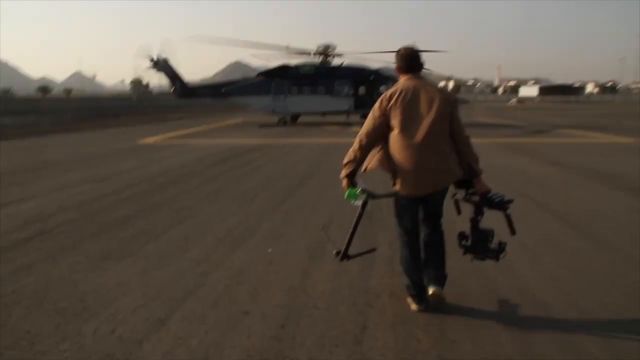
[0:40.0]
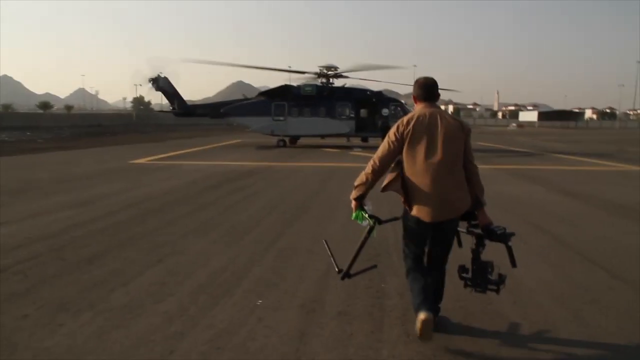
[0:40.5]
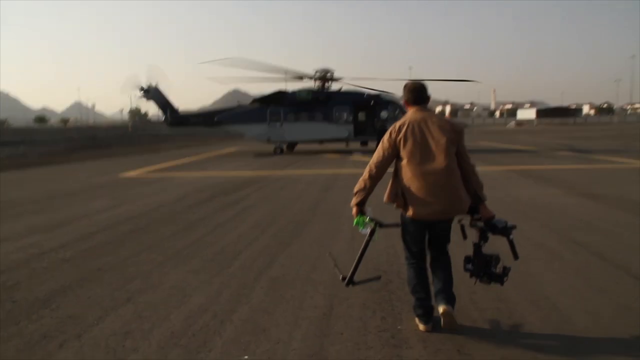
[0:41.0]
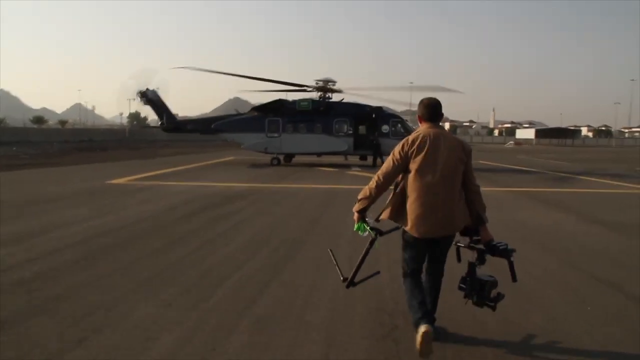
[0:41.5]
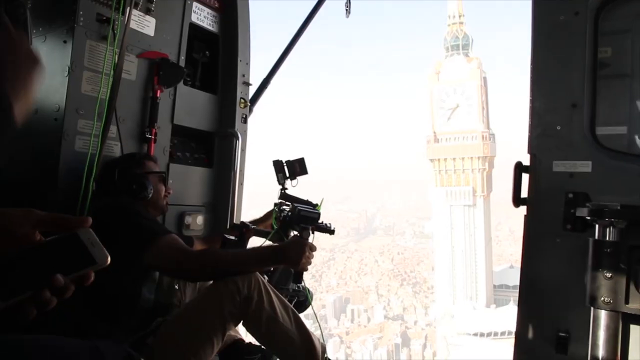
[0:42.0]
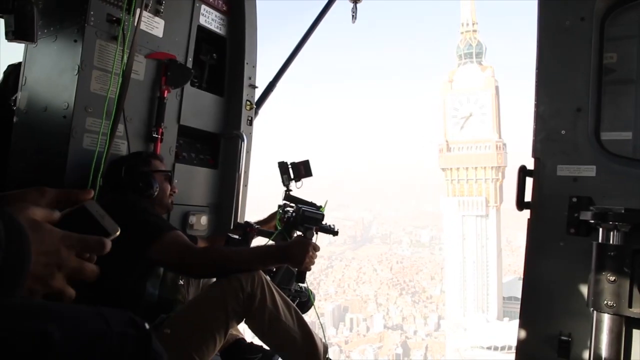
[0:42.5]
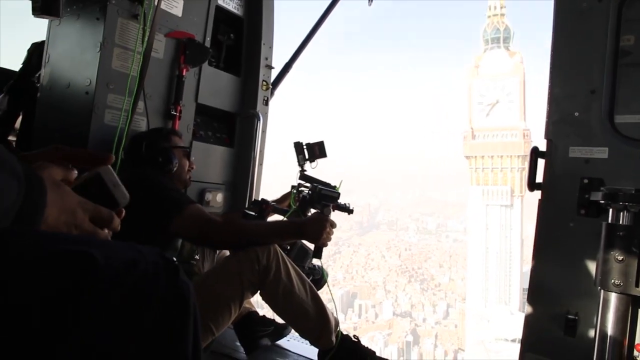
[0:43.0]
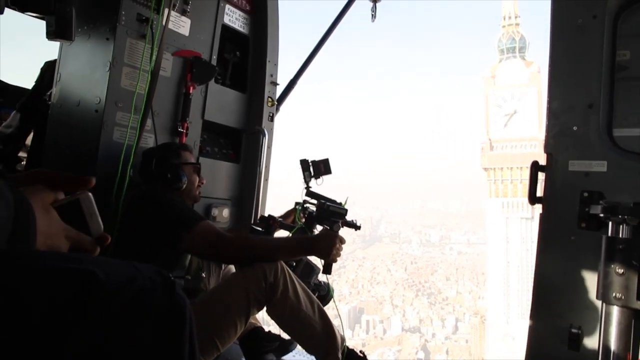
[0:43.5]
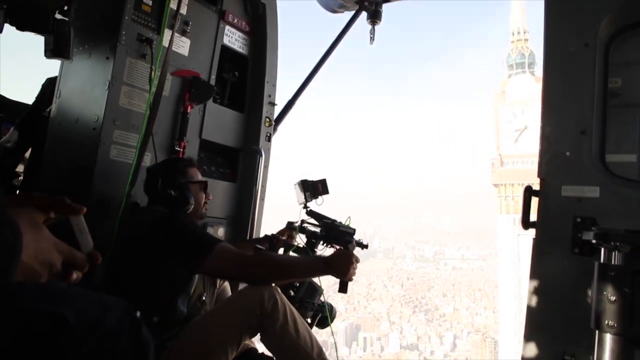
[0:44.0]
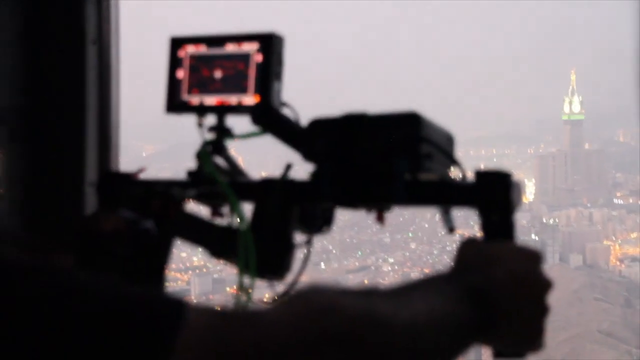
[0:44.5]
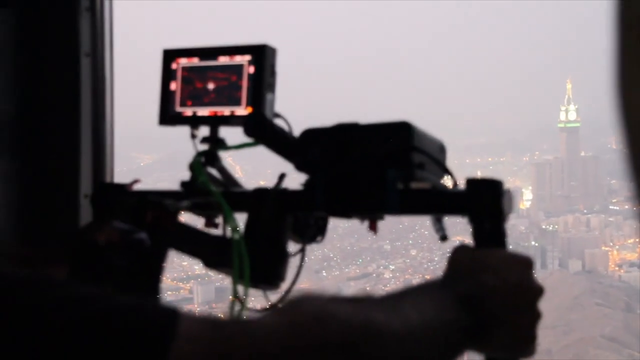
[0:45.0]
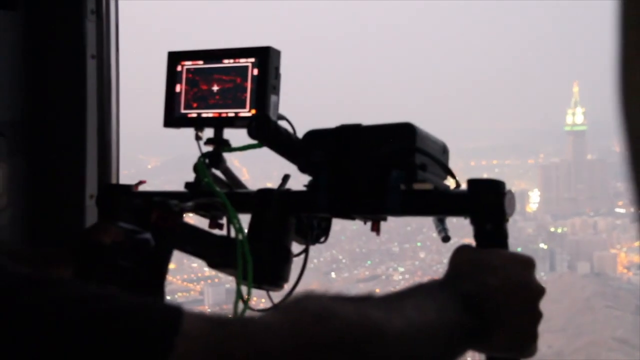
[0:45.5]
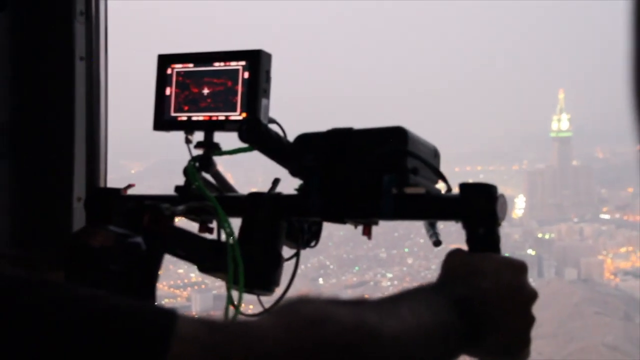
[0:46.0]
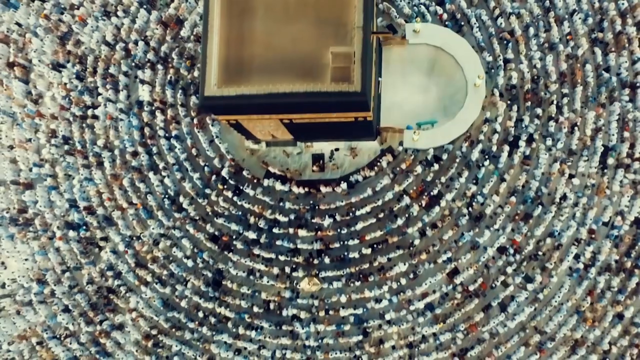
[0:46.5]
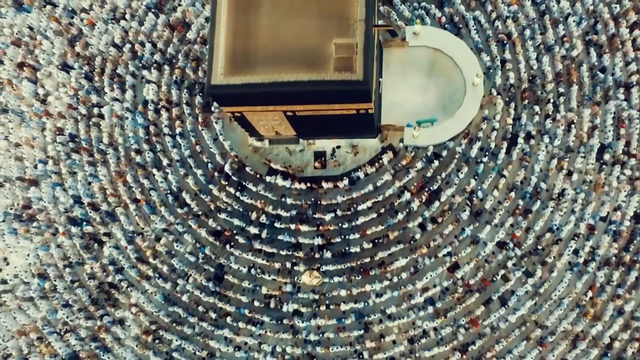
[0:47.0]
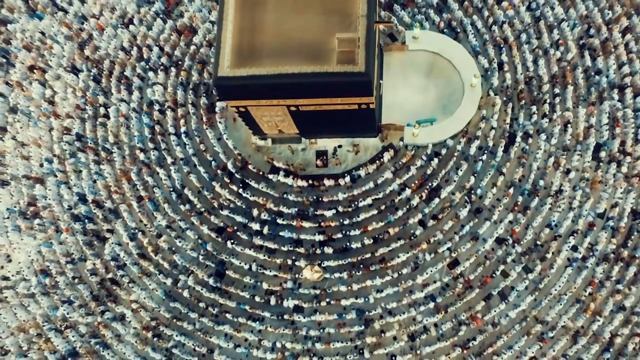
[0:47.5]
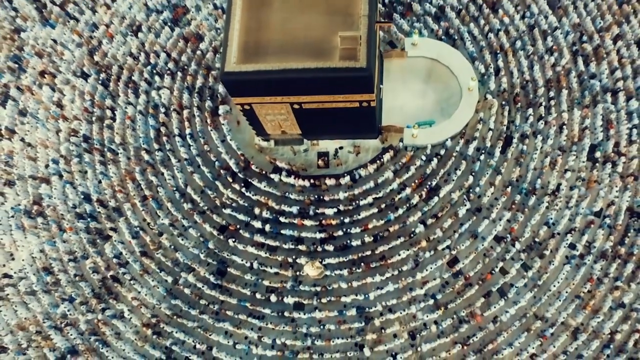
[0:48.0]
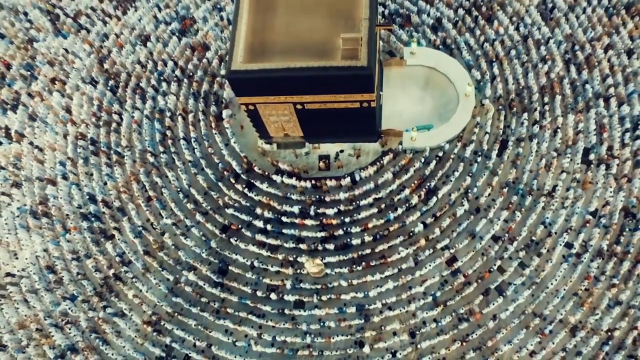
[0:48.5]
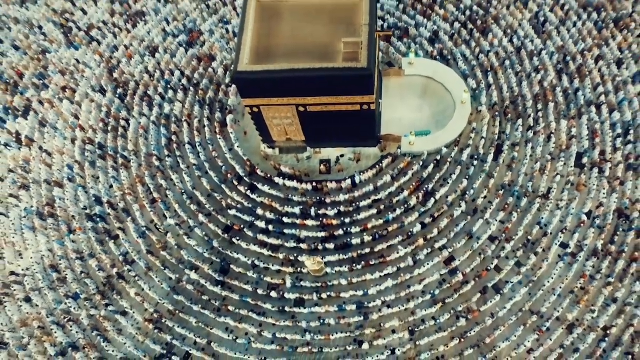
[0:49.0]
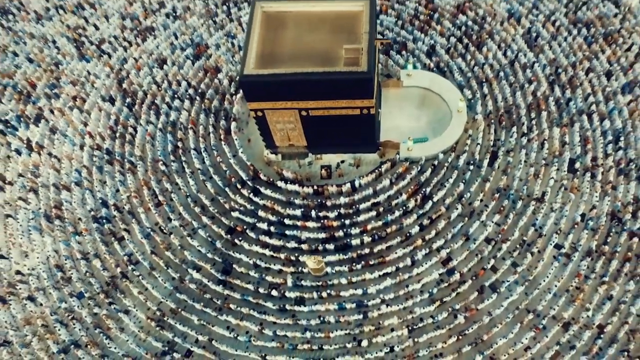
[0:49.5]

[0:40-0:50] One of the movie crew goes back to the plane and gets in it while the whole area of the Arab city is being filmed. Below, hundreds of people are shown from all around; they are in circles, all close together, circling a certain building. The filming continues from above, from a helicopter. Movie crew members are also seen holding their equipment for filming.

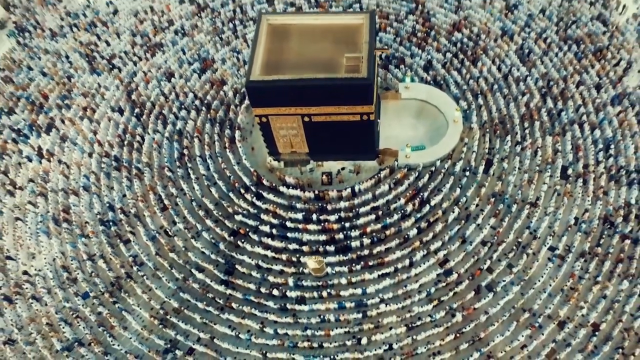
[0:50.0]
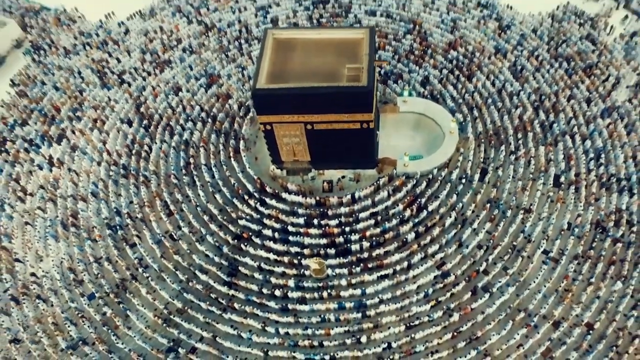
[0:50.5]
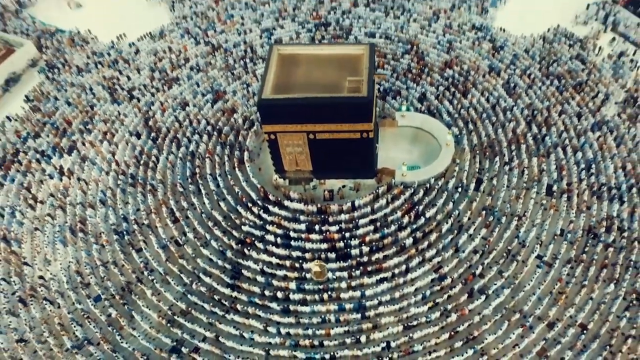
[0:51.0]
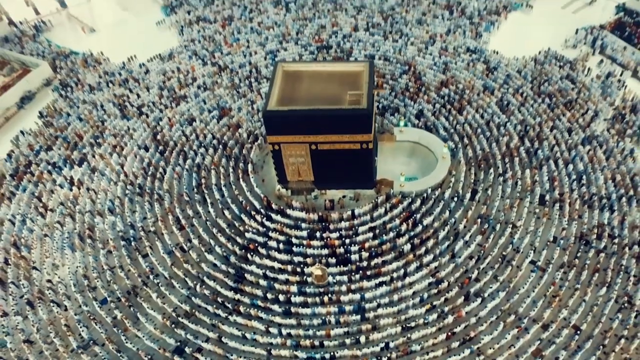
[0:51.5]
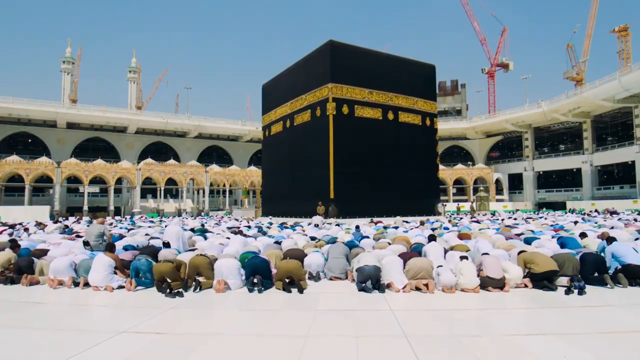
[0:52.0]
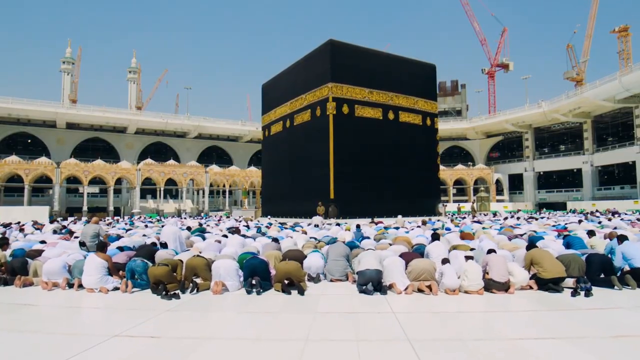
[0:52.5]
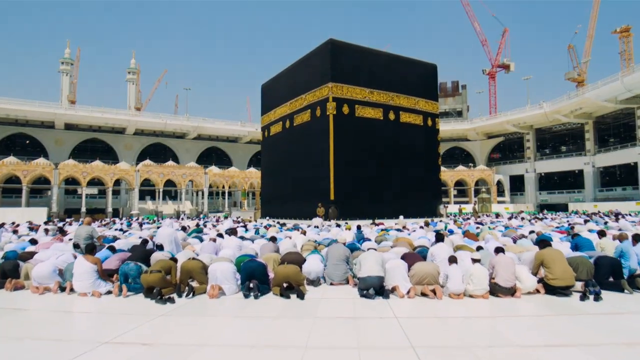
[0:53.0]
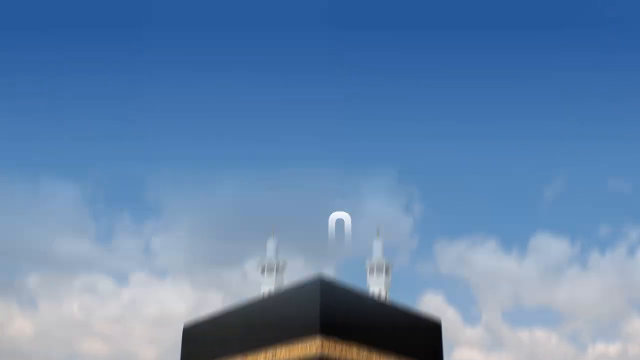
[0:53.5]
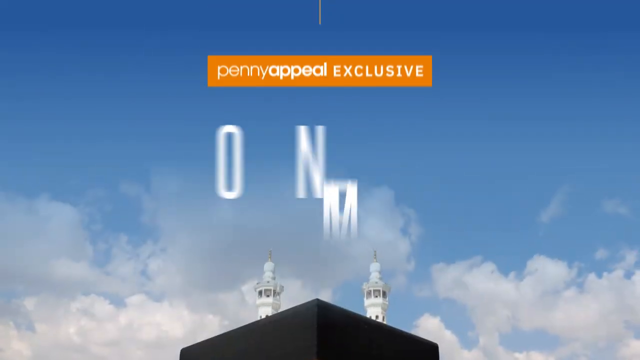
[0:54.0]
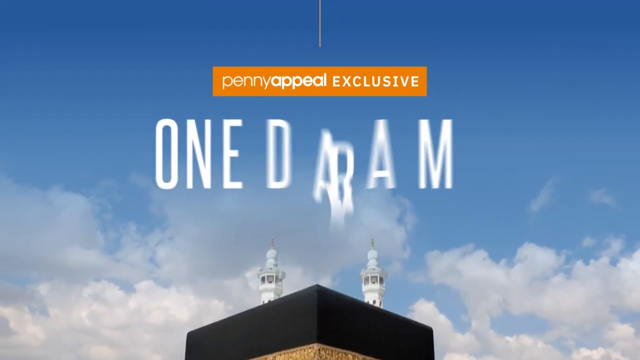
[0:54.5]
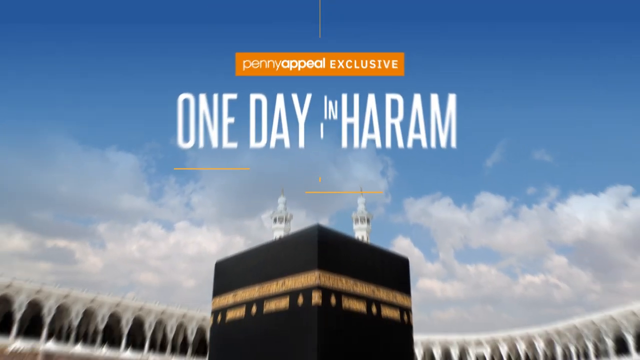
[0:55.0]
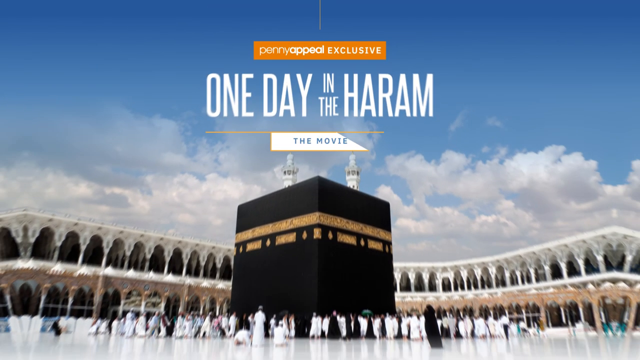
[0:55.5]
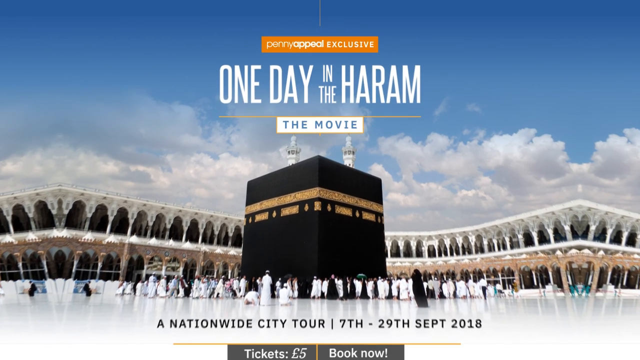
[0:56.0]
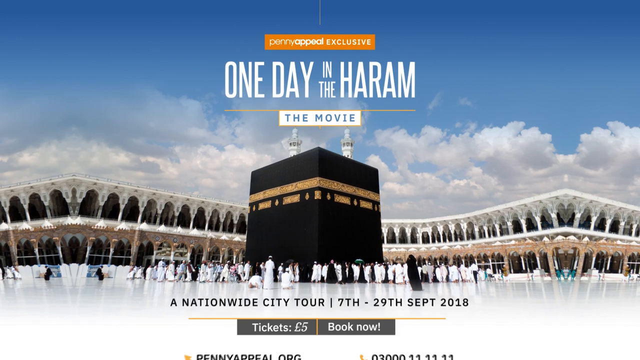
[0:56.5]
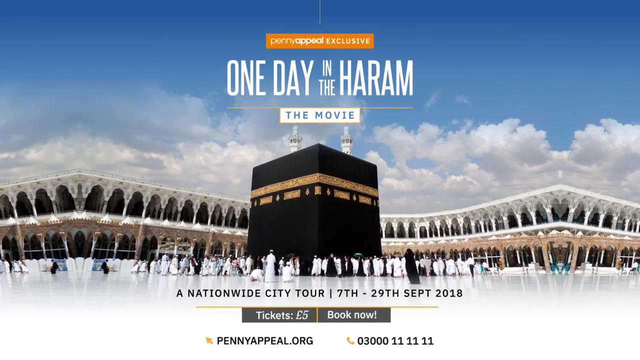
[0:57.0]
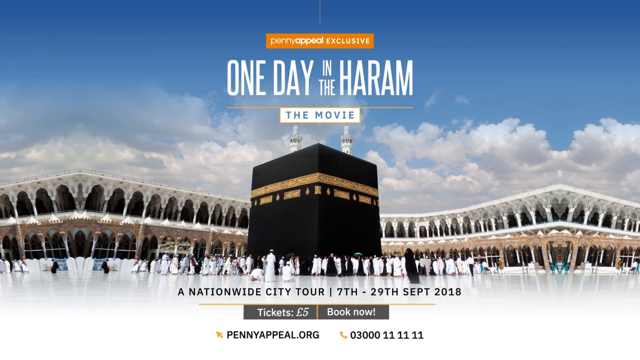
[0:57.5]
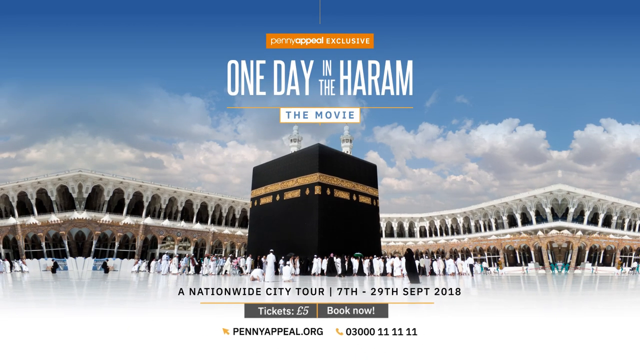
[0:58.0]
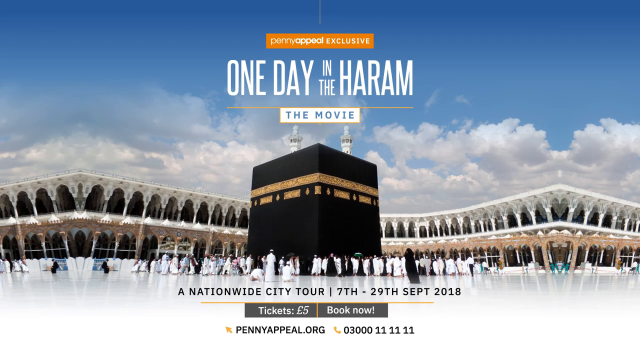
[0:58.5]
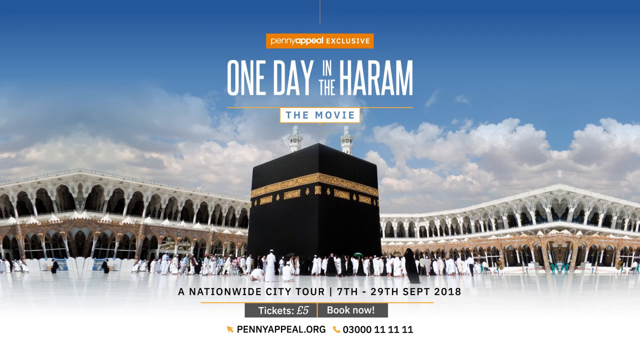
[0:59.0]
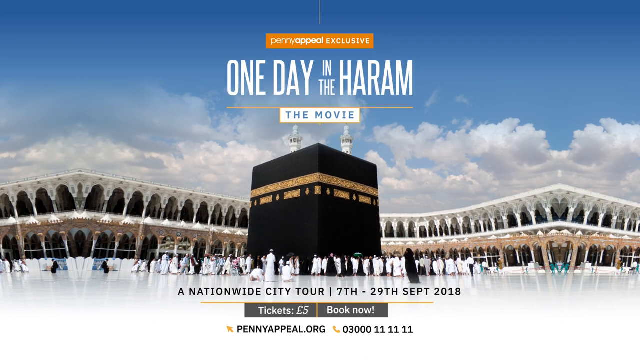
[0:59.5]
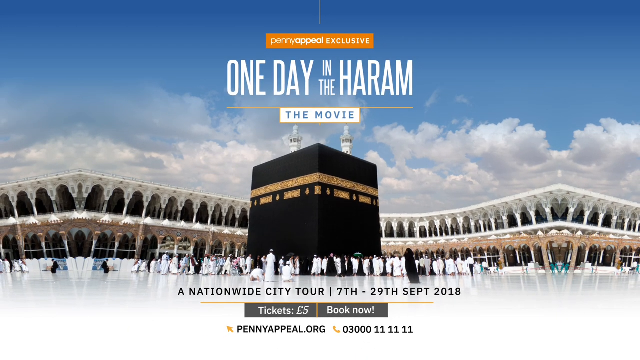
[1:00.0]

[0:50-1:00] A large crowd of people praying is shown. Then text appears reading "one day in the haram", the name of the movie, while people praying are shown. Written text also refers to a nationwide city, with dates from the 17th to 29th September 2018. Hundreds and hundreds of people praying appear in the movie.